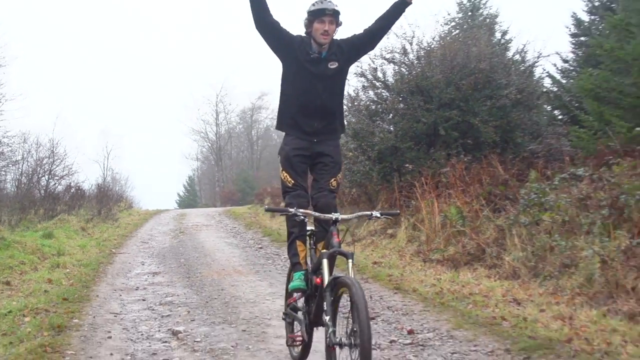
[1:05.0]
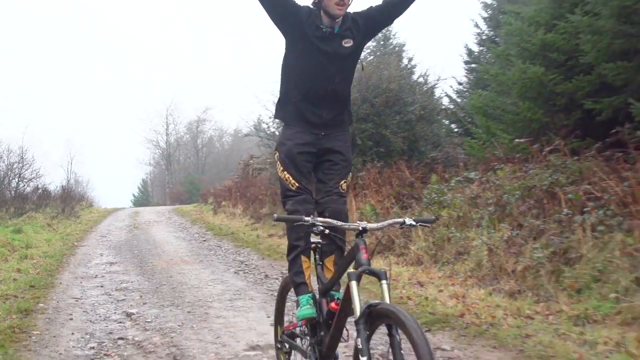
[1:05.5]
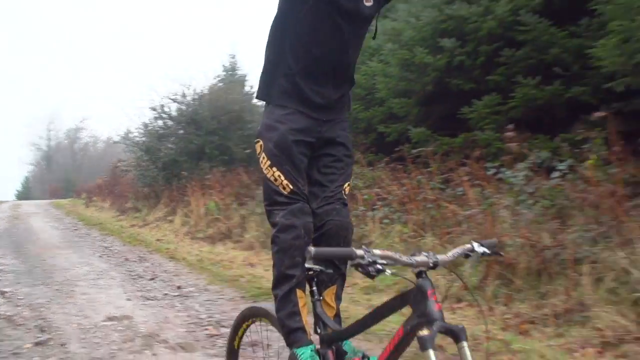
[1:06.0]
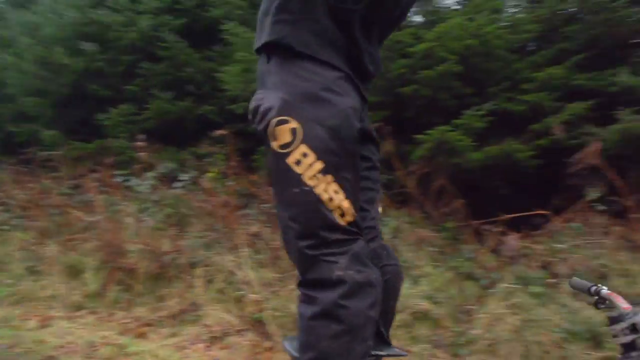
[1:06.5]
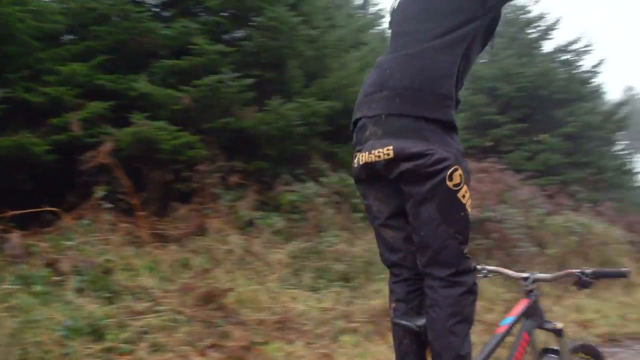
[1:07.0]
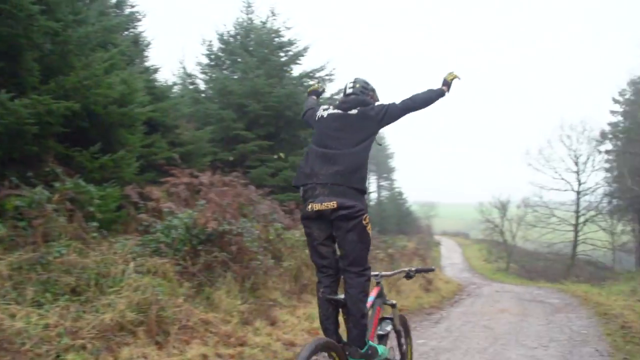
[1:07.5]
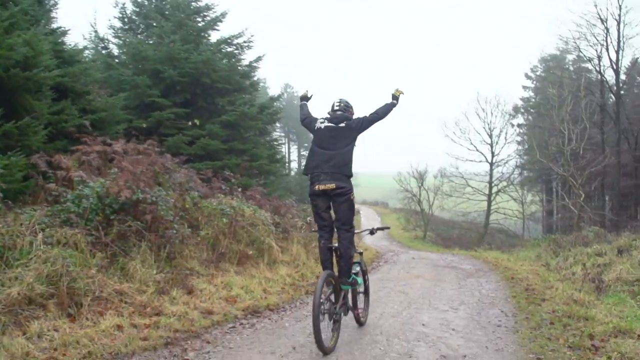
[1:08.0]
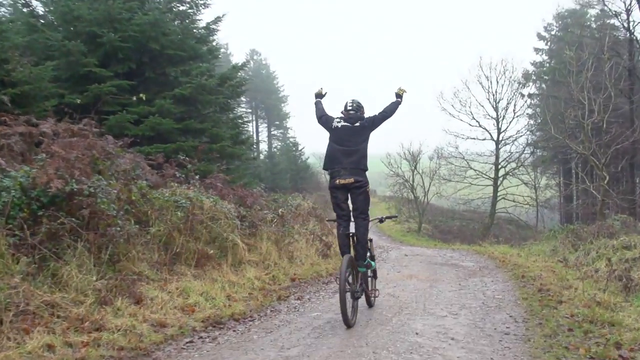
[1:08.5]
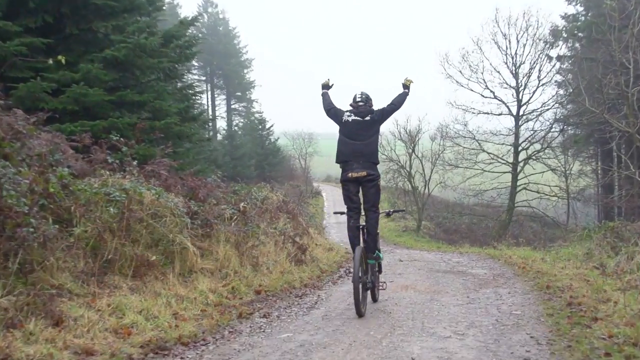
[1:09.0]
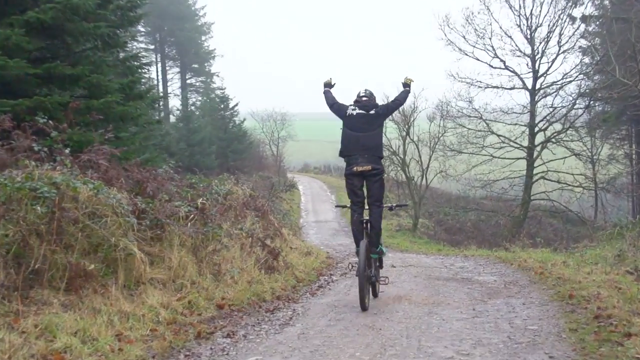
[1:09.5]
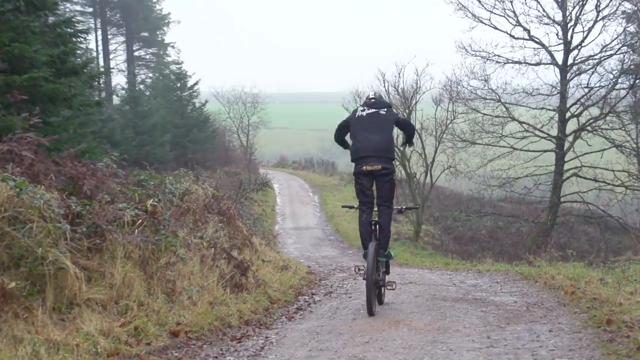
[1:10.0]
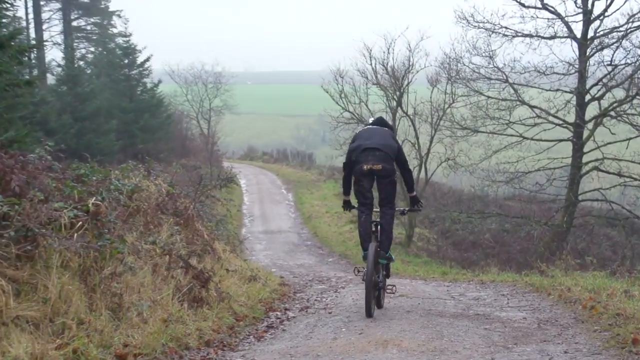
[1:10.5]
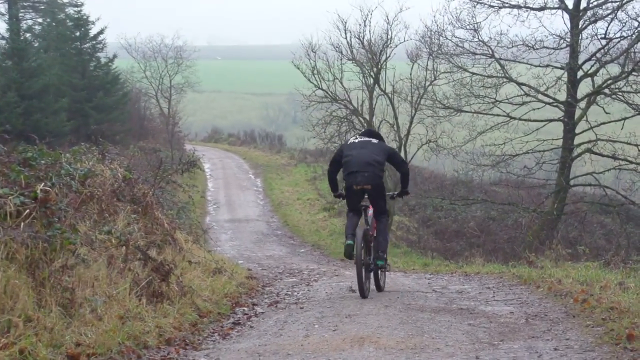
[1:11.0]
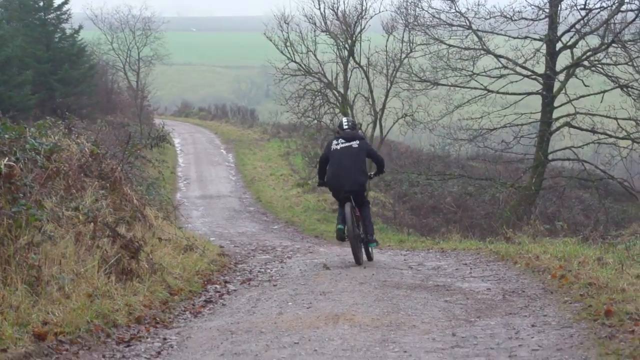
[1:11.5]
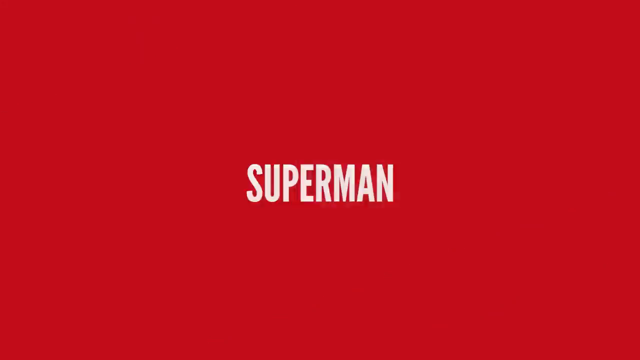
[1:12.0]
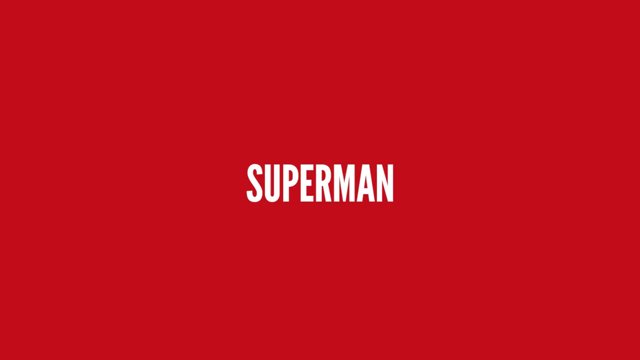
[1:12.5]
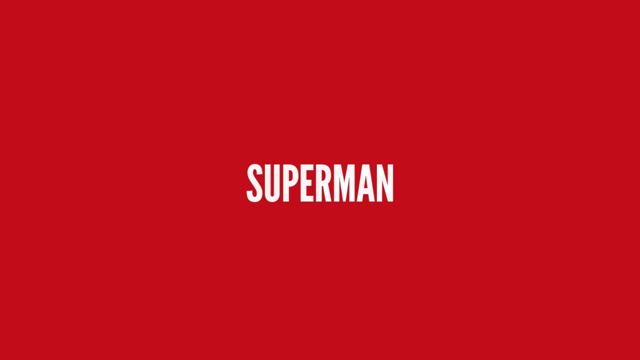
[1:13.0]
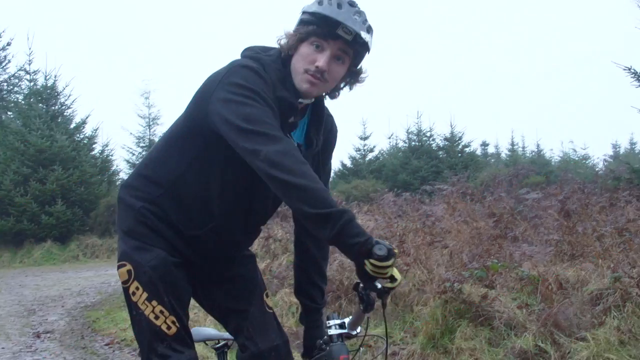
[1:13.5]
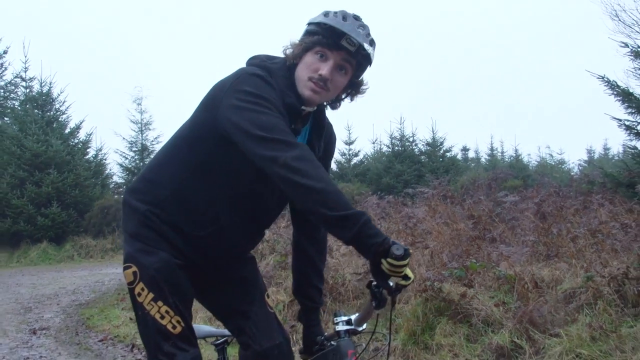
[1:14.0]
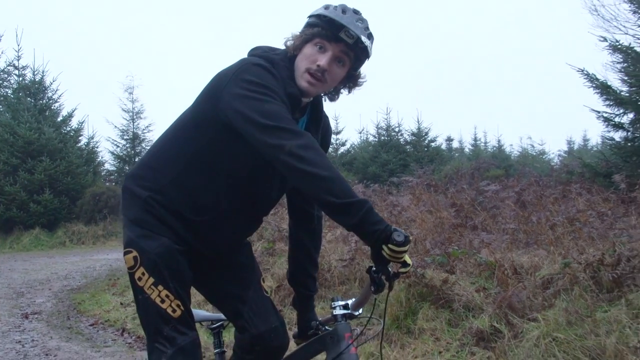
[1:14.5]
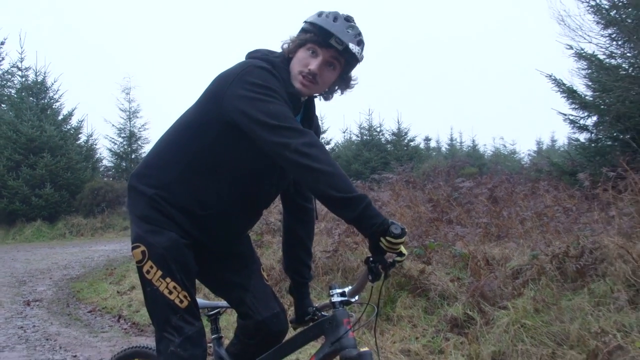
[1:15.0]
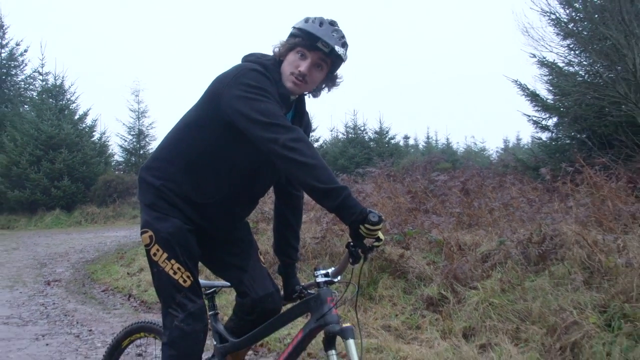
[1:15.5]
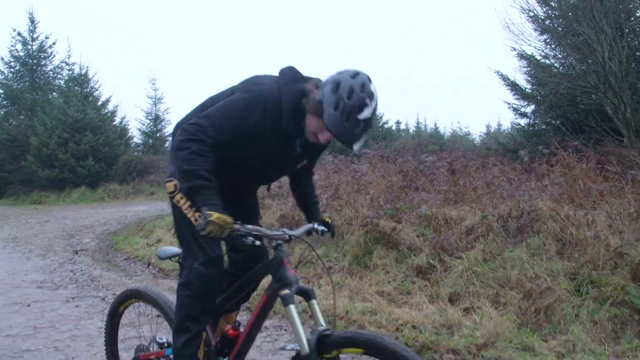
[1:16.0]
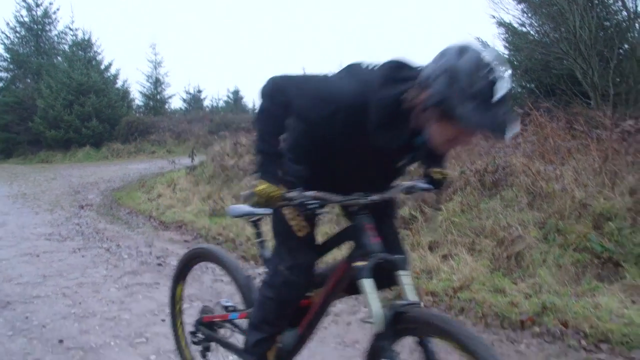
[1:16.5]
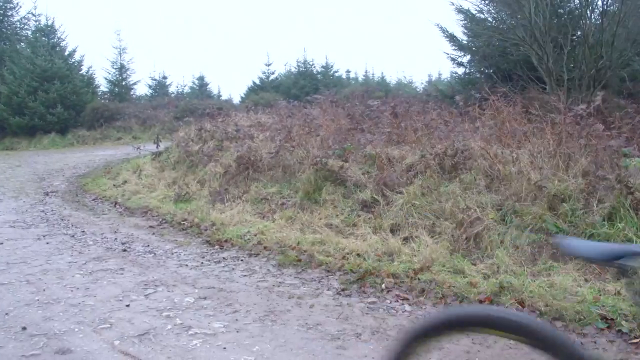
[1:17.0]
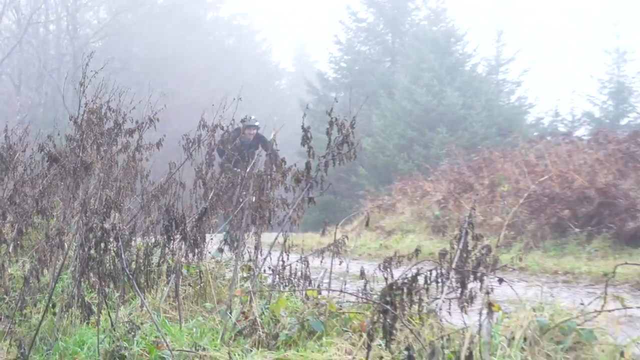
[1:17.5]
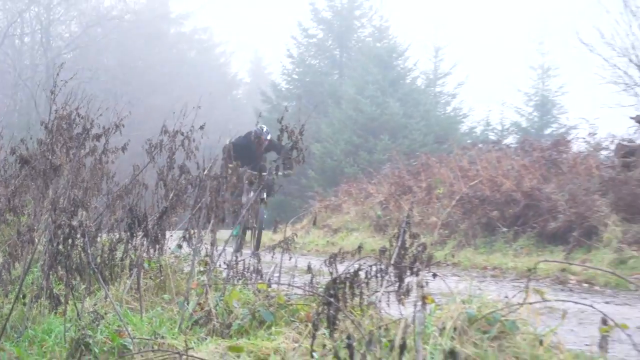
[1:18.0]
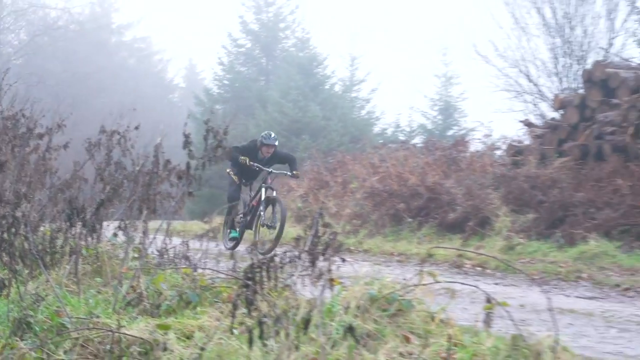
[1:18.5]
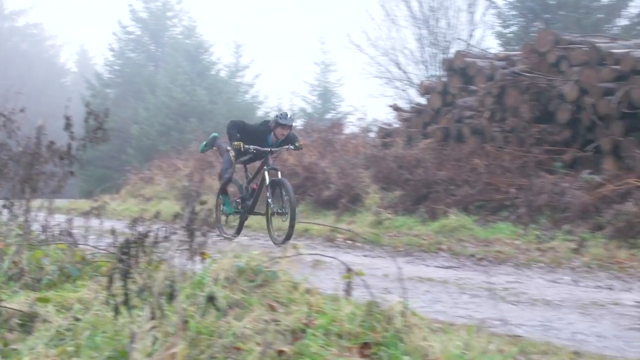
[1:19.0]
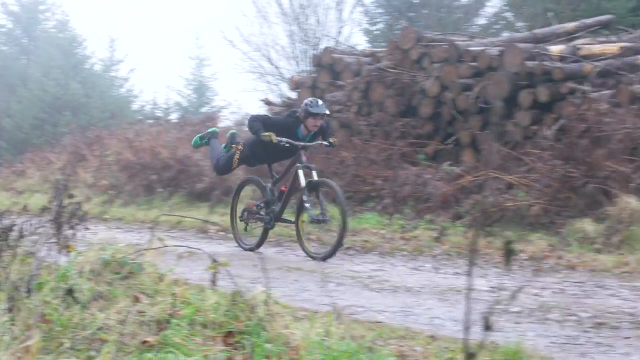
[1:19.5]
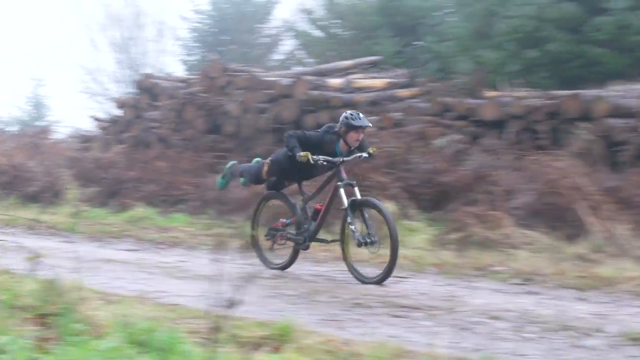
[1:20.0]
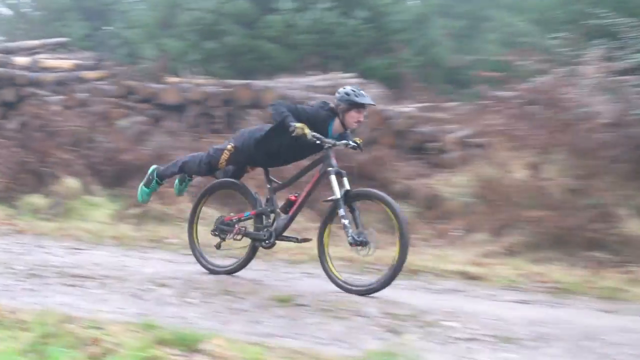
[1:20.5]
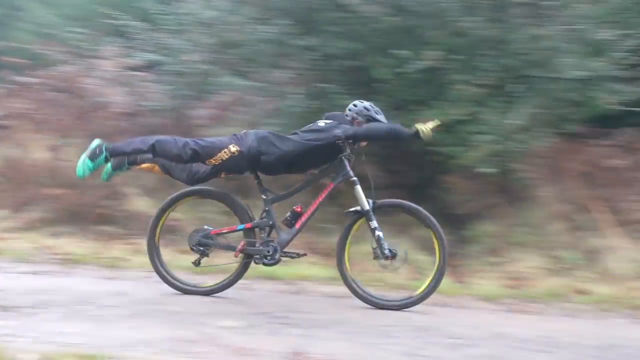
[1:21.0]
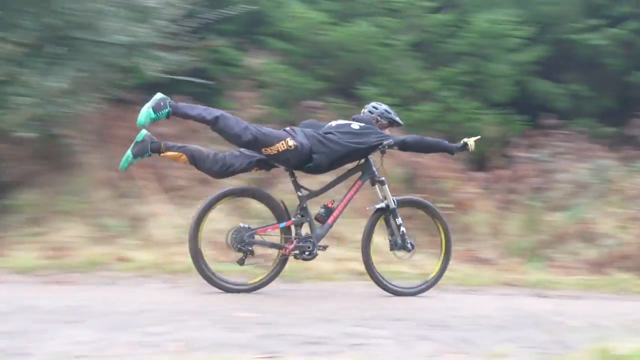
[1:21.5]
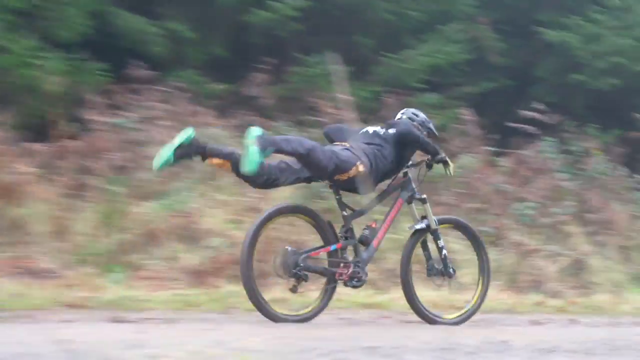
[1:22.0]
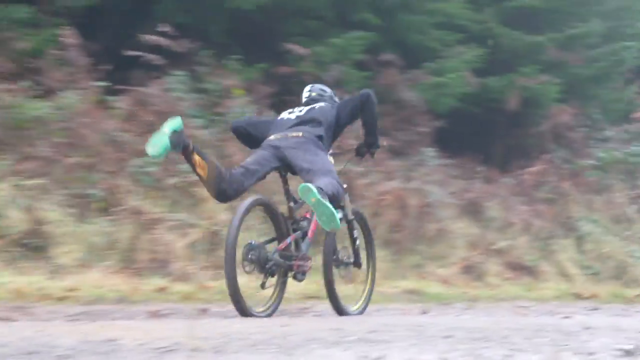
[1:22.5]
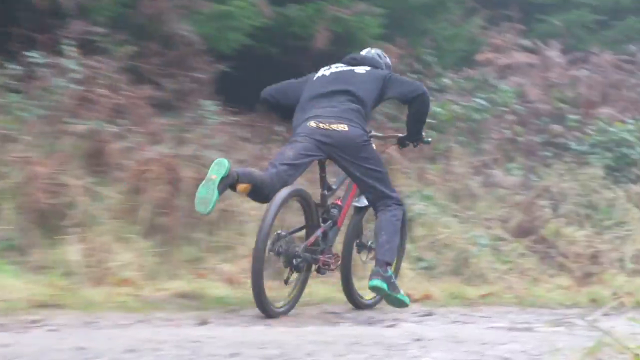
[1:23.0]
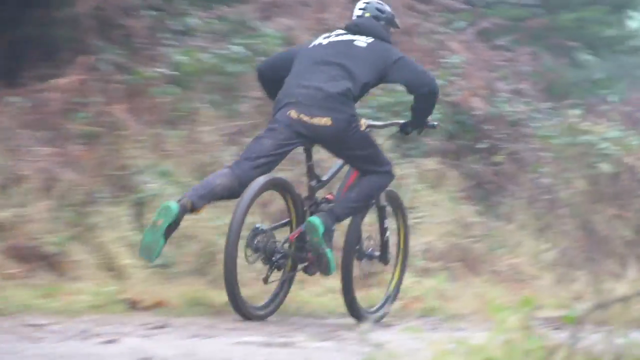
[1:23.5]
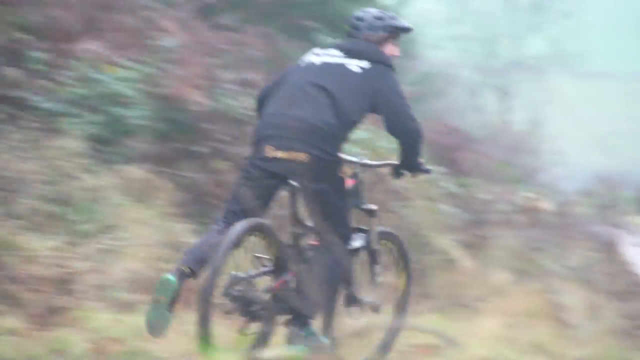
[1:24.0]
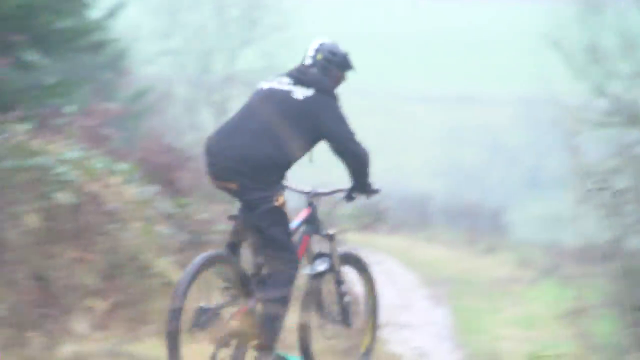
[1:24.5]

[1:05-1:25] The guy goes back down the hill standing up on the bike, apparently demonstrating the trick called the superman. Going really fast, he kind of lies down on the bike, his body flat, trying to maintain balance as it goes down the hill. He stays stretched out for maybe two seconds before returning to a normal riding position. His feet almost touch the ground when he gets back on the bike, but he catches his balance. A close-up shows he has facial hair, a mustache.